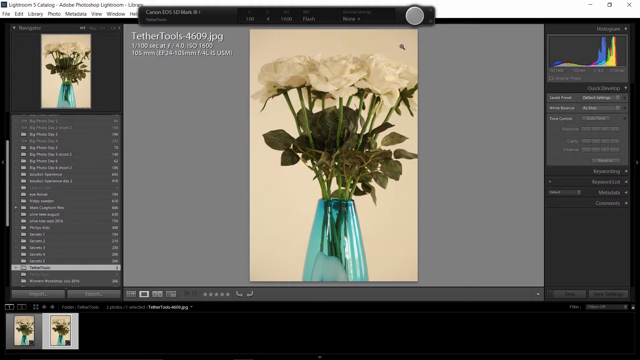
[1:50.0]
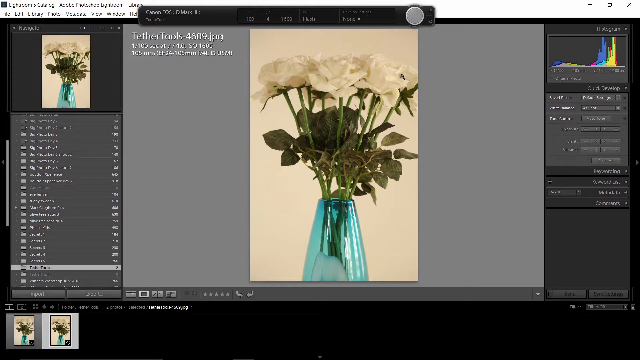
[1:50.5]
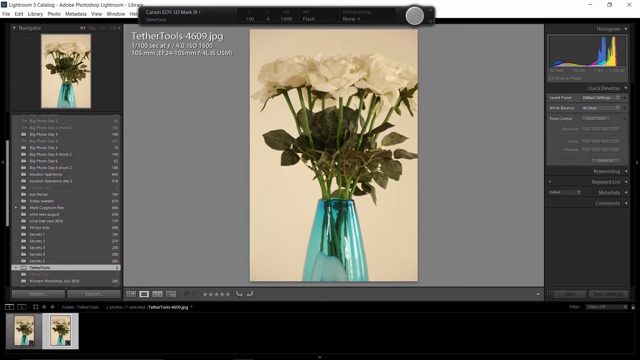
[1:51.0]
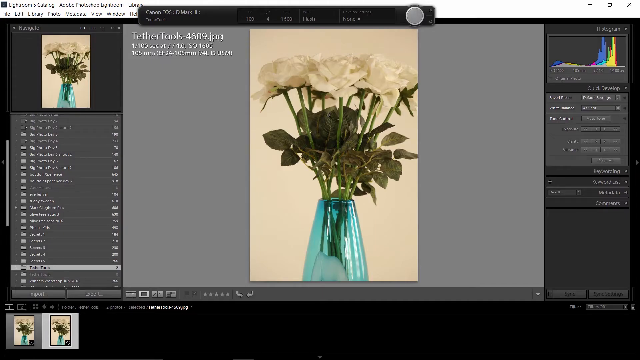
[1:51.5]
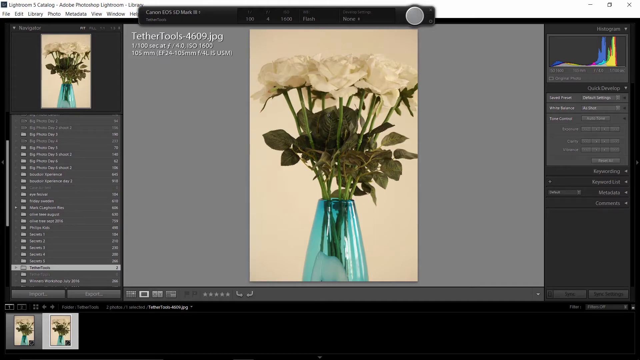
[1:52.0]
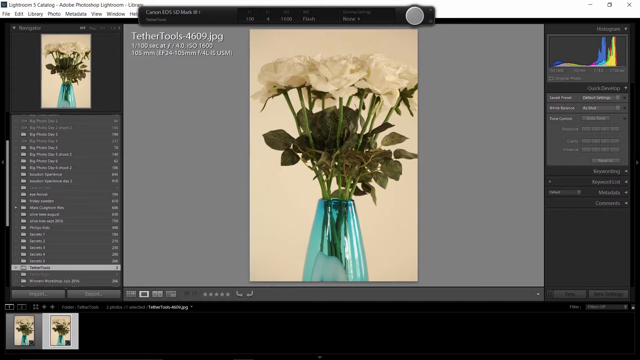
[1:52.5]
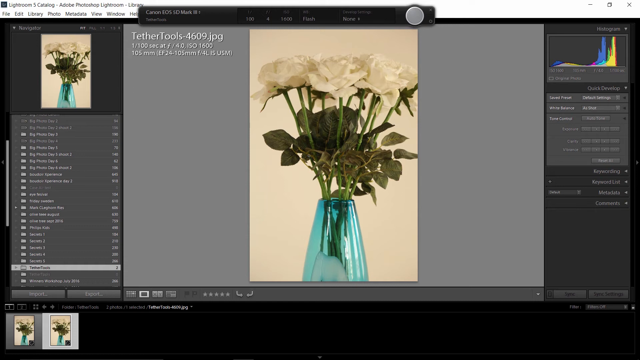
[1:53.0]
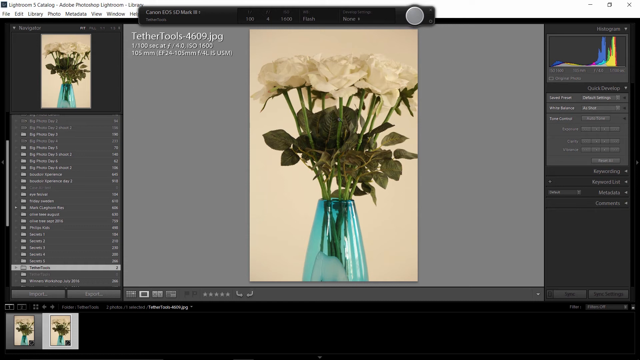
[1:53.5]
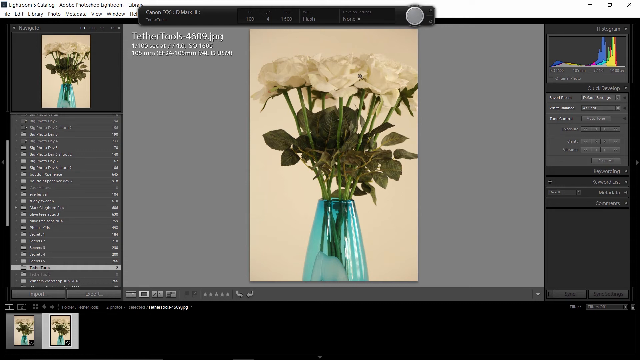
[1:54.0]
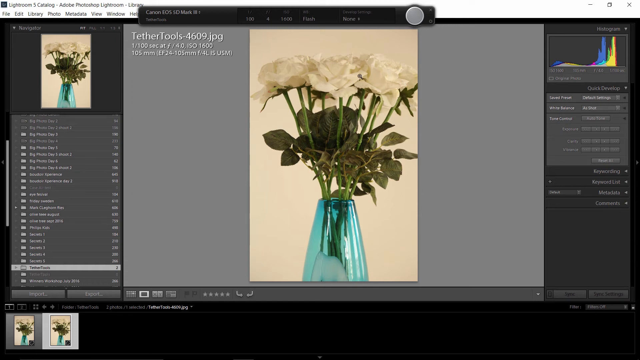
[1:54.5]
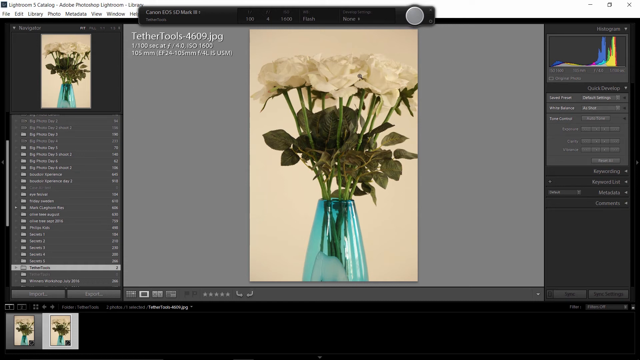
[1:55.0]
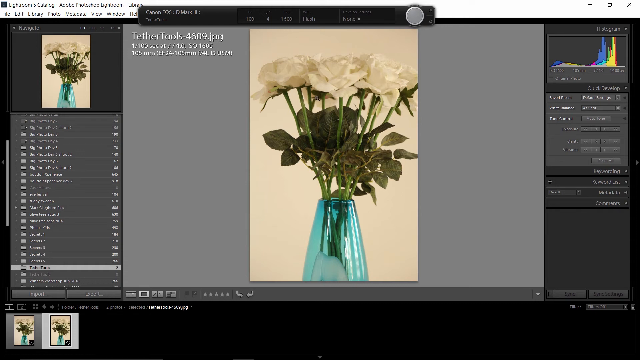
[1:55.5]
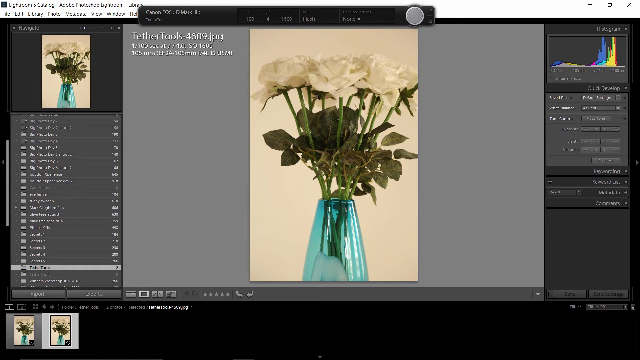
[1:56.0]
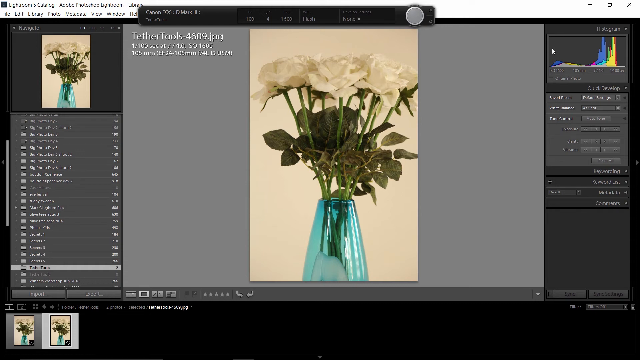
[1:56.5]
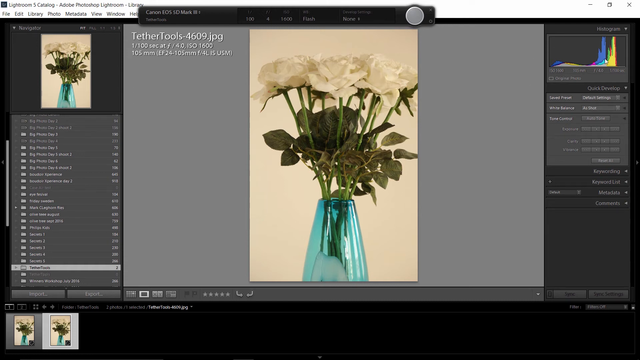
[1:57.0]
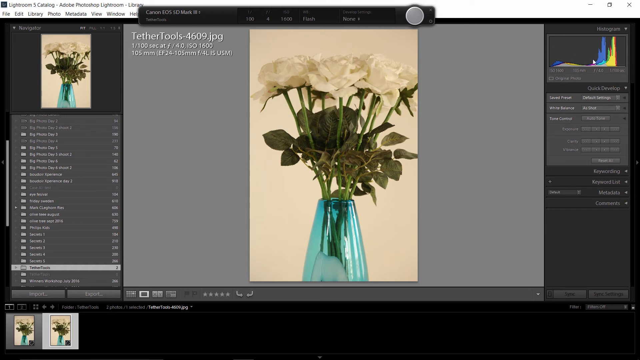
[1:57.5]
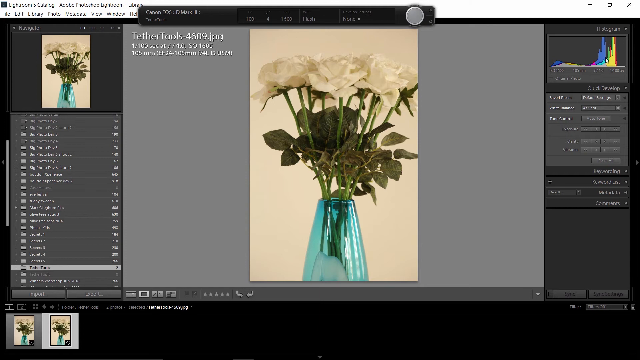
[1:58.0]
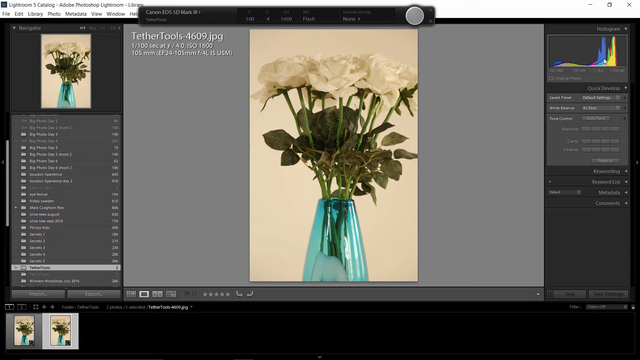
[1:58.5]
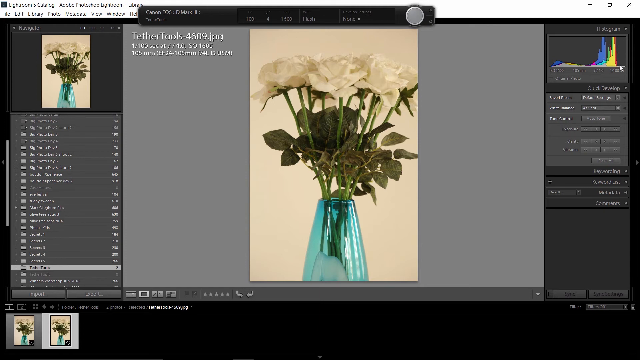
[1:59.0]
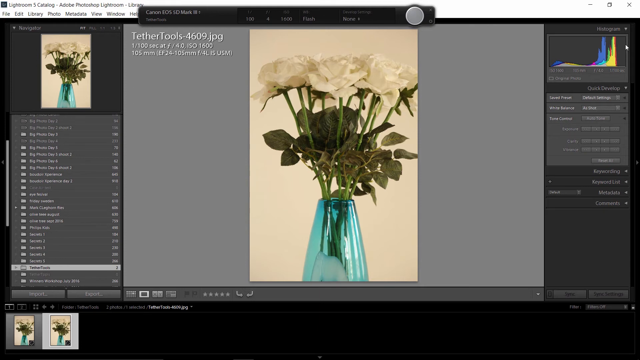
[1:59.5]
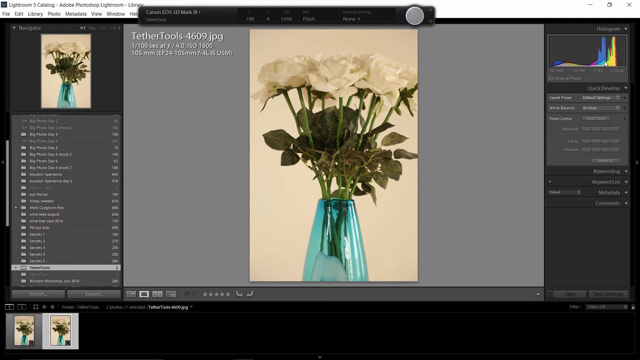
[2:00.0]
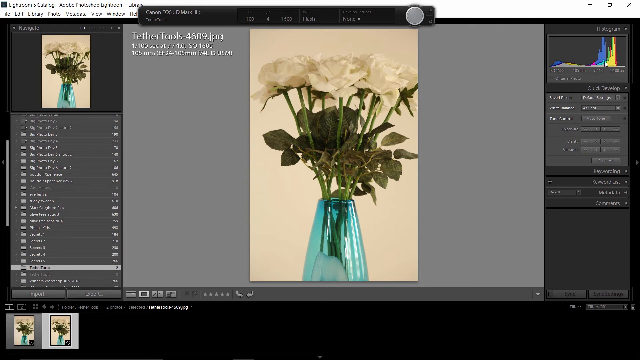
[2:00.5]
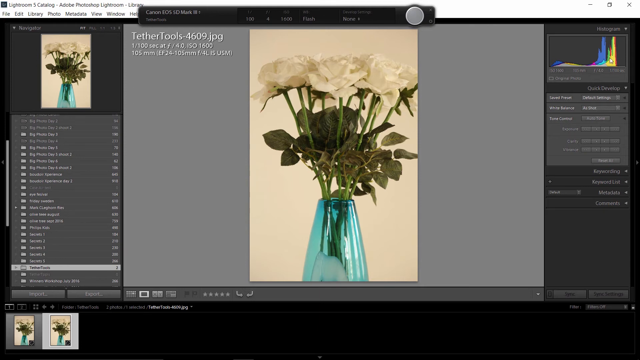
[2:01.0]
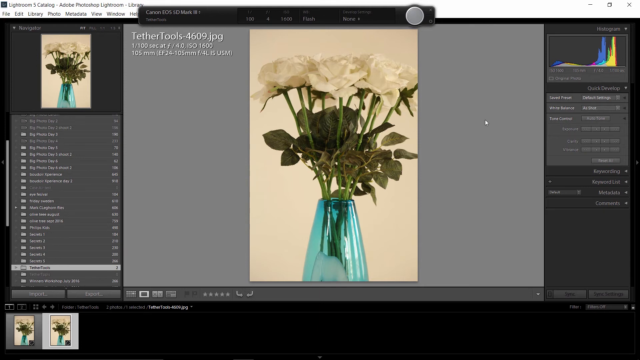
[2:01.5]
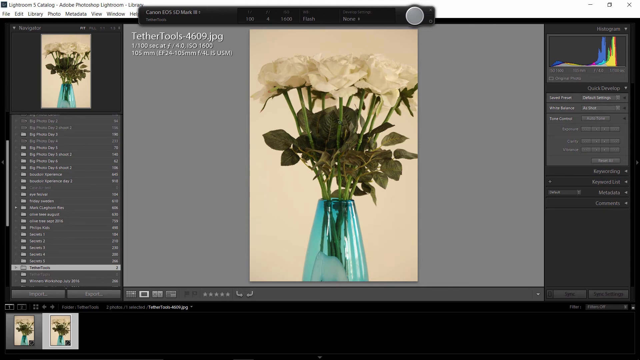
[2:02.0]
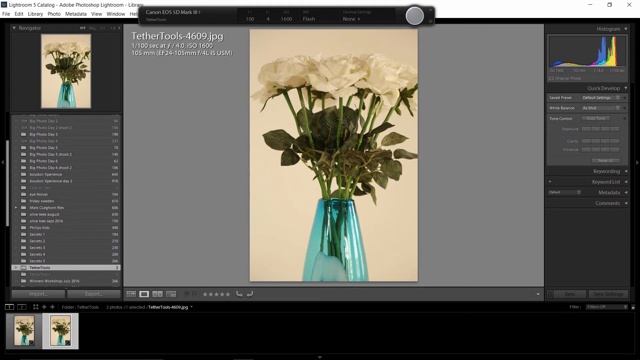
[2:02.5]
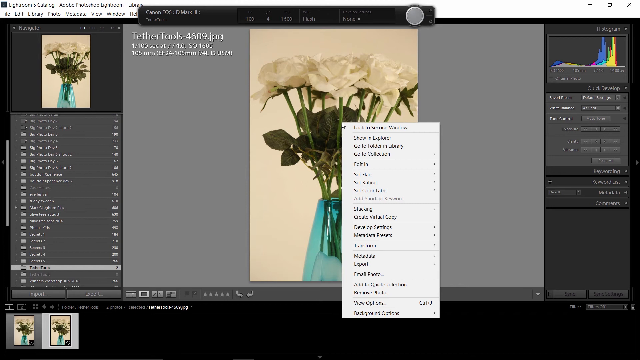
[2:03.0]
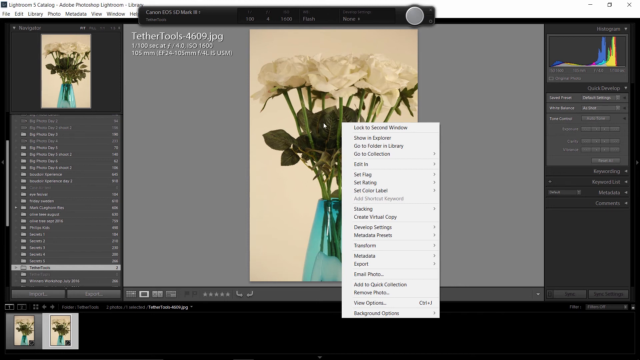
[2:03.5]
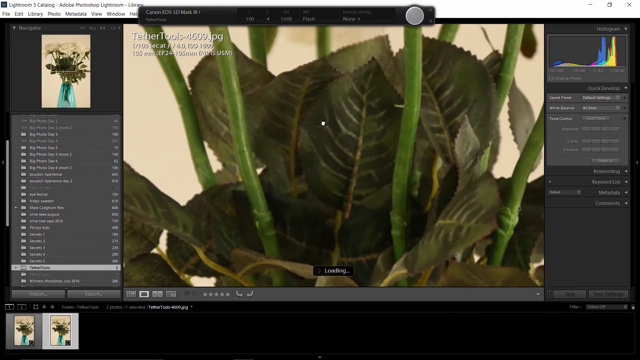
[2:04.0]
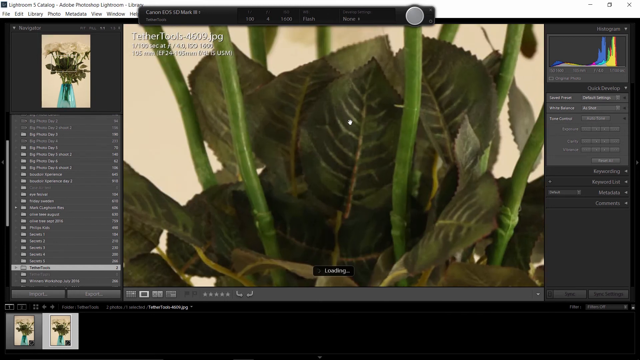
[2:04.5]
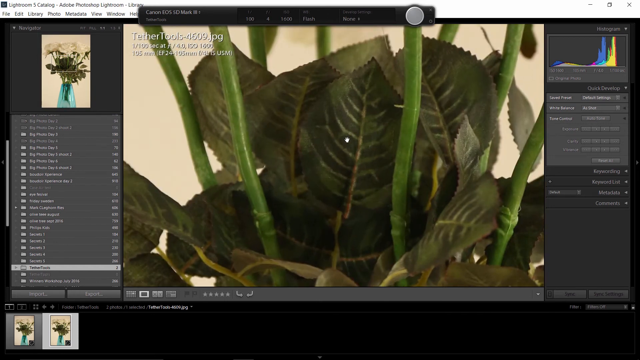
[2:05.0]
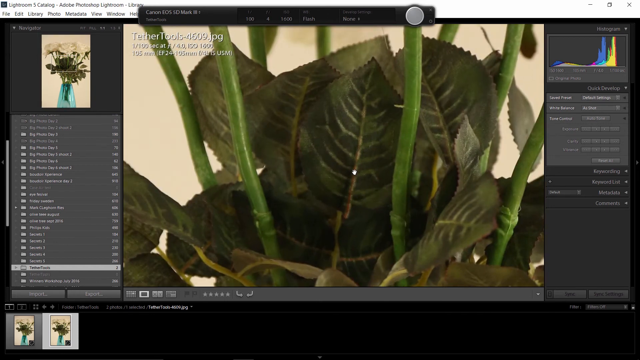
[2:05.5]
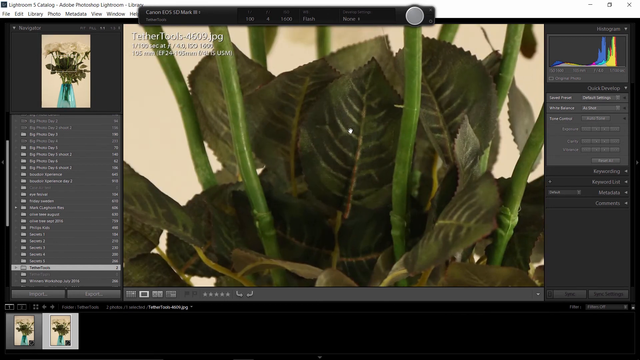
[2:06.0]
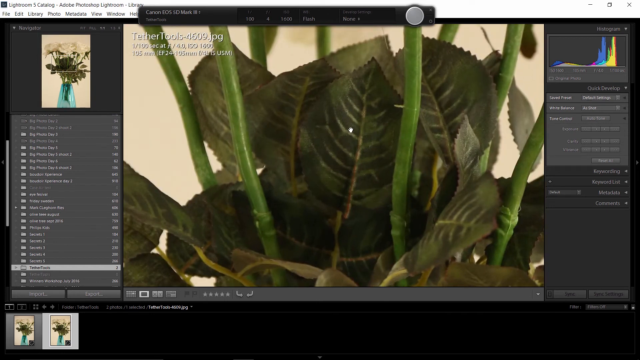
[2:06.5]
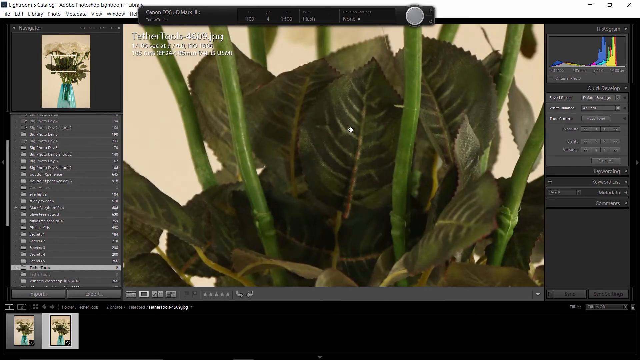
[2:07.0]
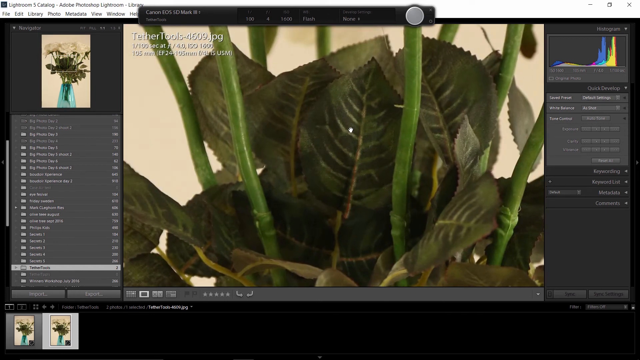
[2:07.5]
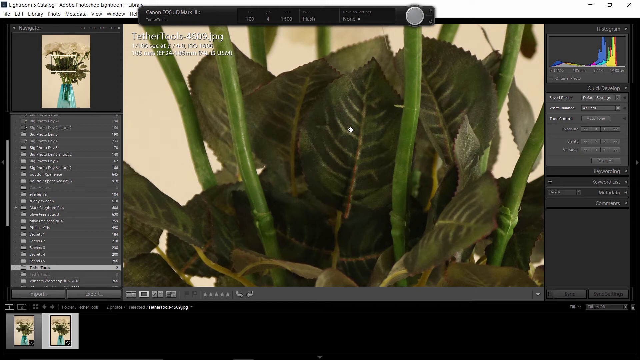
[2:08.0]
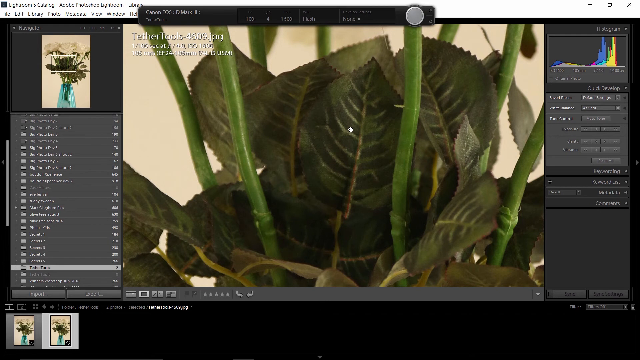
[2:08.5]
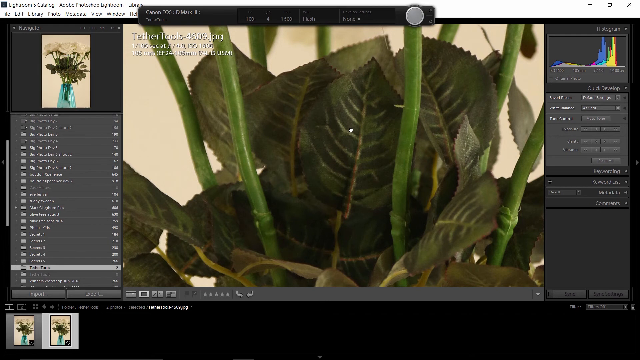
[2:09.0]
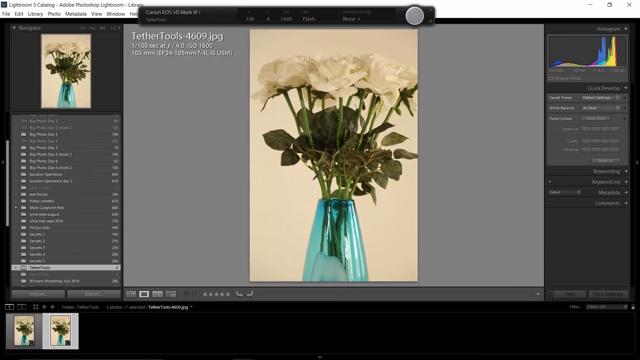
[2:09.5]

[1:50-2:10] The picture the man takes with the camera appears in the screen recording of the computer. It shows the blue vase, which is tall, thin and slightly transparent, with around seven stems in it that are visible through the glass. Above are white rose-like flowers, tall, with multiple green leaves on them, standing quite tall over the vase. In the top left corner above the flower is the text "tethered tools" along with the camera settings used when the picture was taken. On the right-hand side is a graph showing different colours, going from quite a low point to two tall points on the right. The person zooms into the picture, revealing the intricate detail of the leaves, including their different veins and their shape.